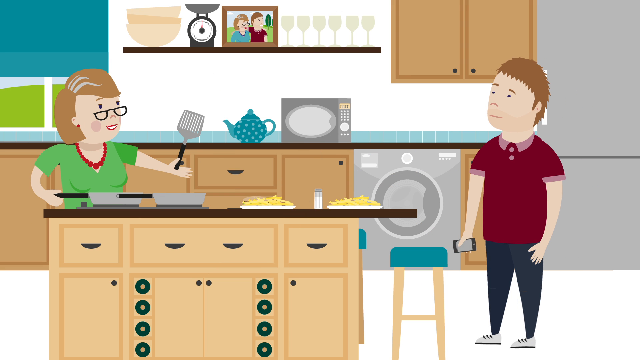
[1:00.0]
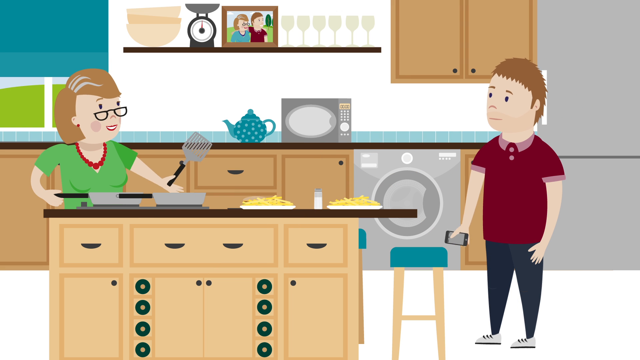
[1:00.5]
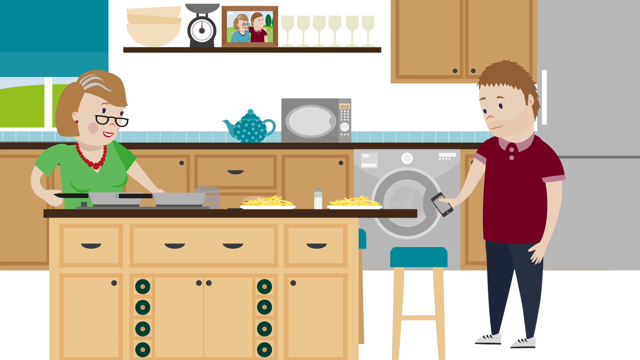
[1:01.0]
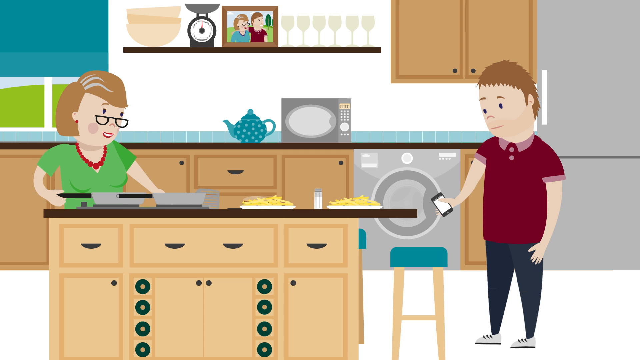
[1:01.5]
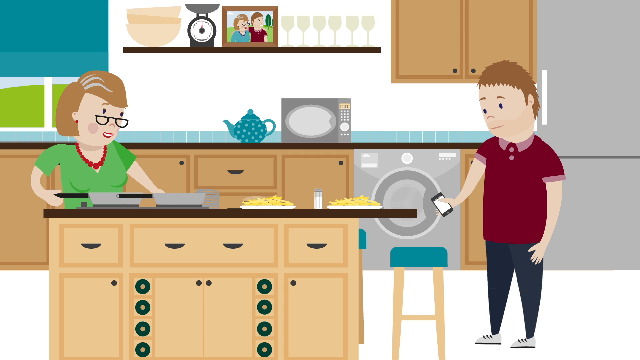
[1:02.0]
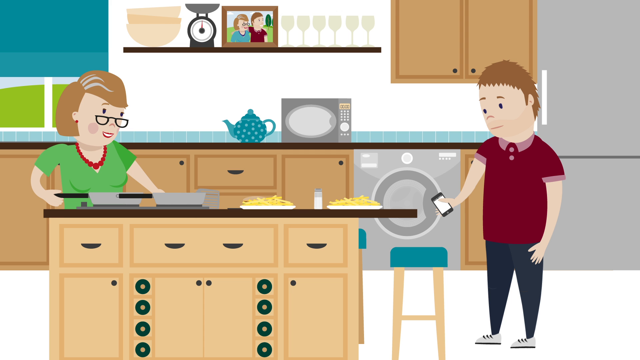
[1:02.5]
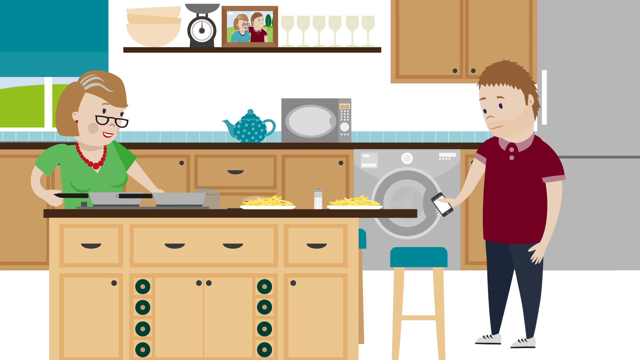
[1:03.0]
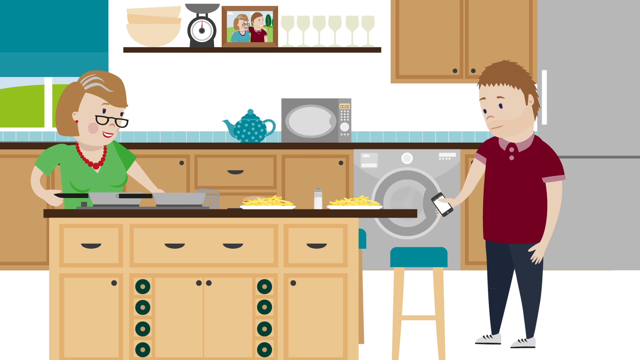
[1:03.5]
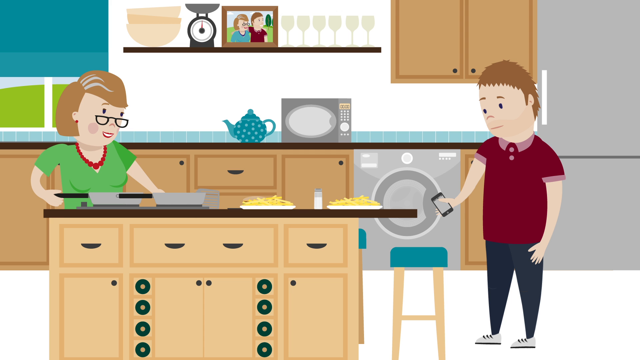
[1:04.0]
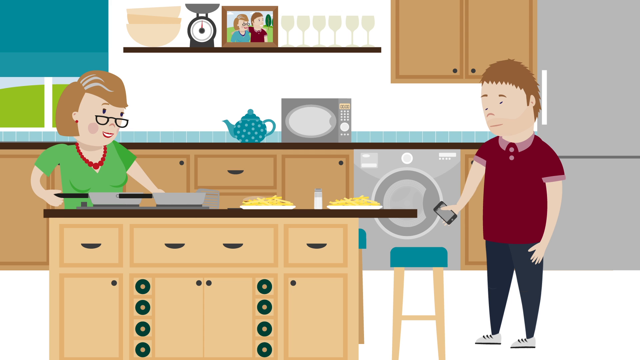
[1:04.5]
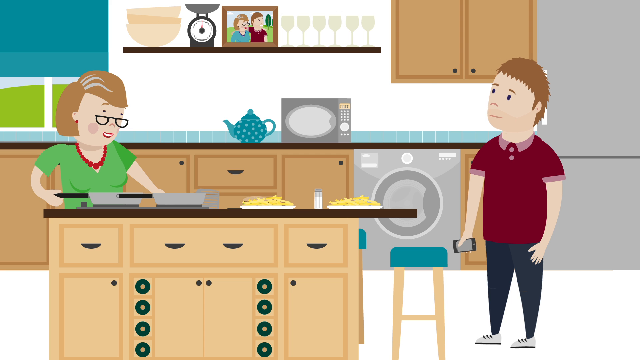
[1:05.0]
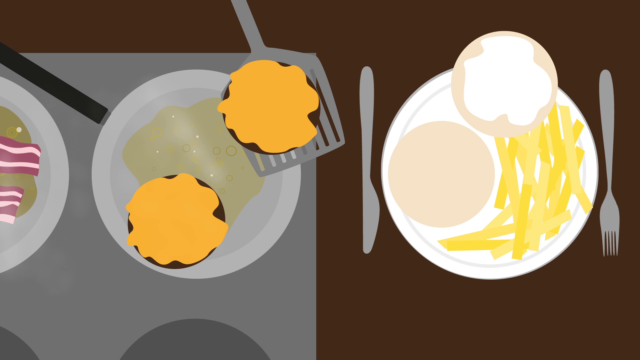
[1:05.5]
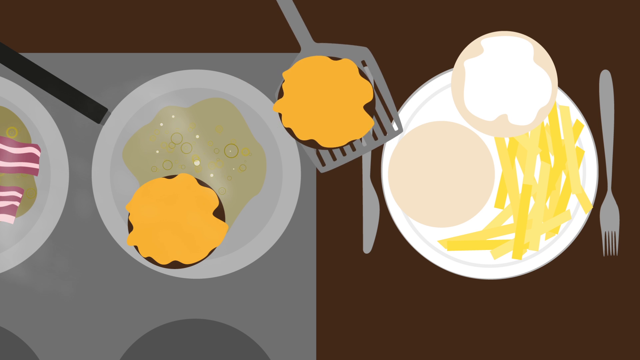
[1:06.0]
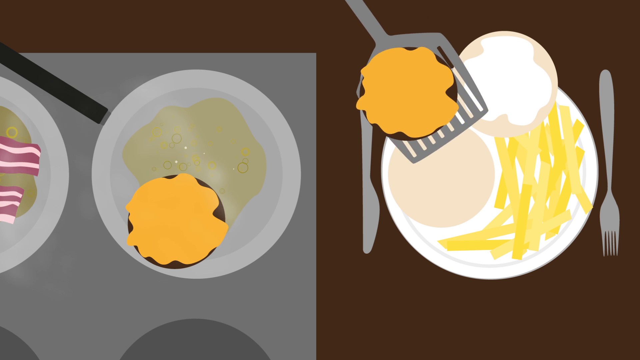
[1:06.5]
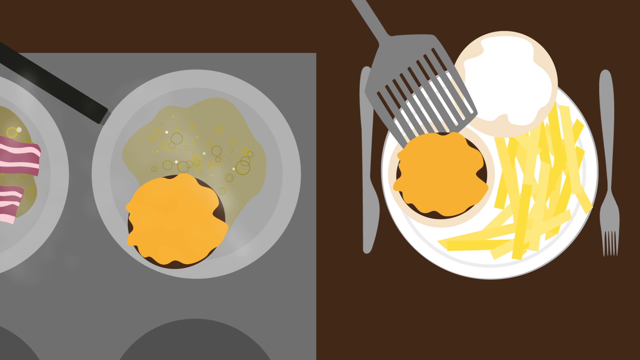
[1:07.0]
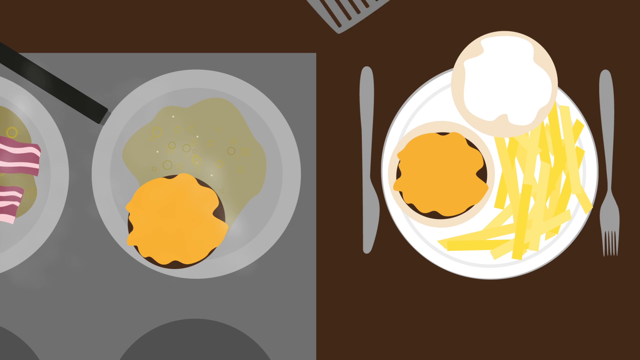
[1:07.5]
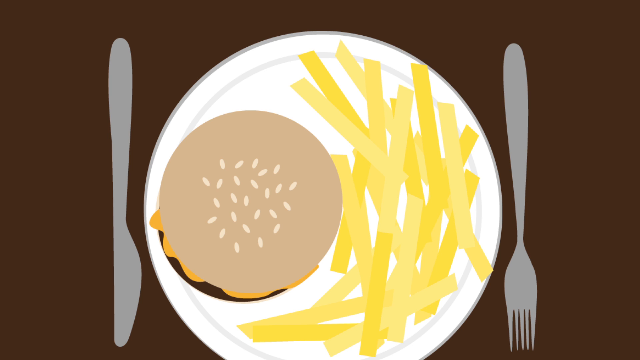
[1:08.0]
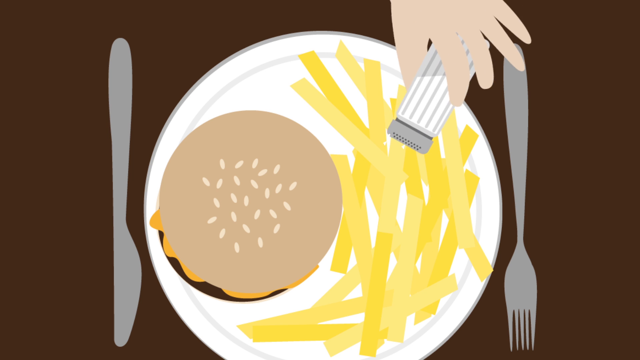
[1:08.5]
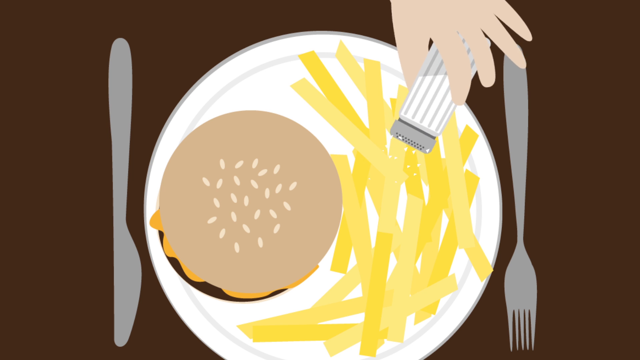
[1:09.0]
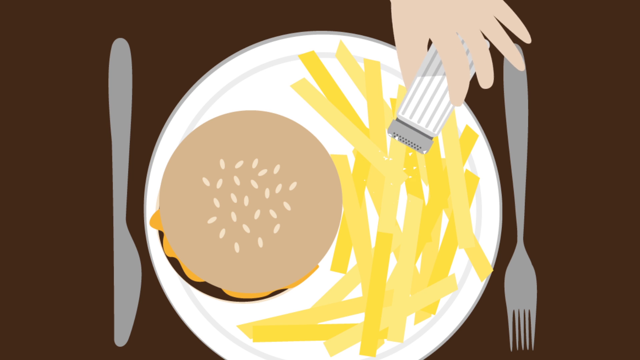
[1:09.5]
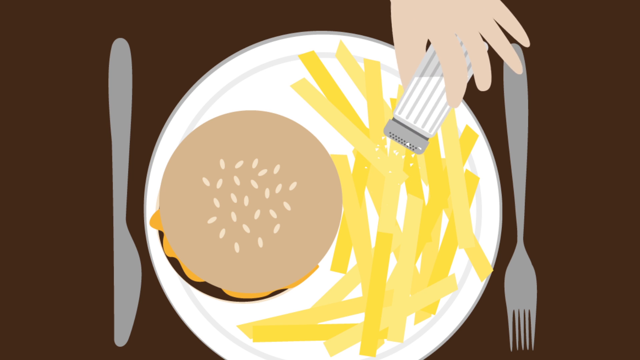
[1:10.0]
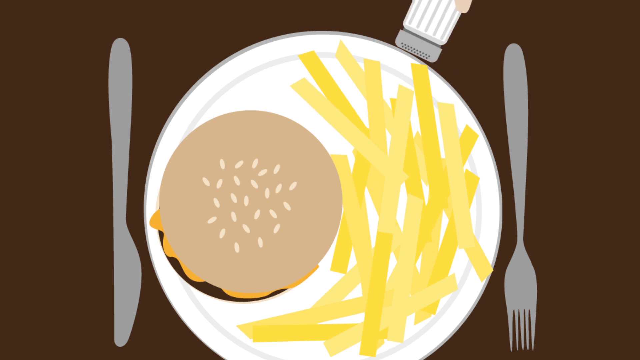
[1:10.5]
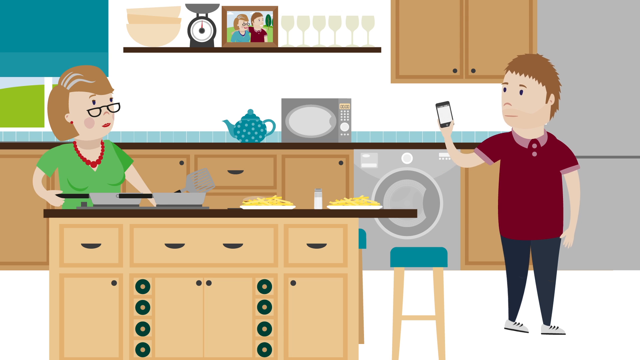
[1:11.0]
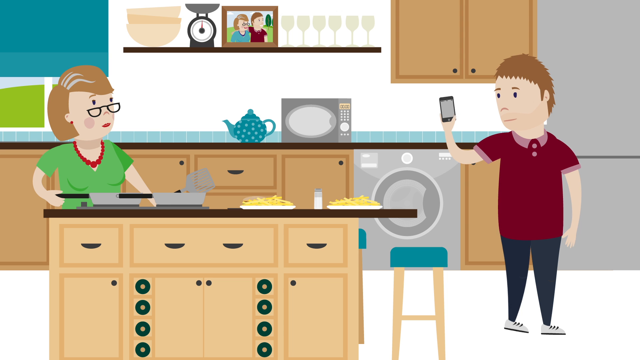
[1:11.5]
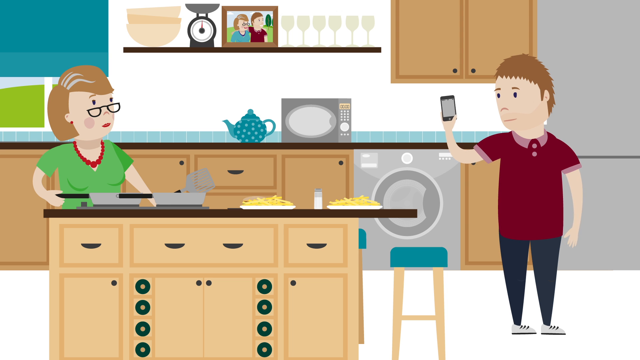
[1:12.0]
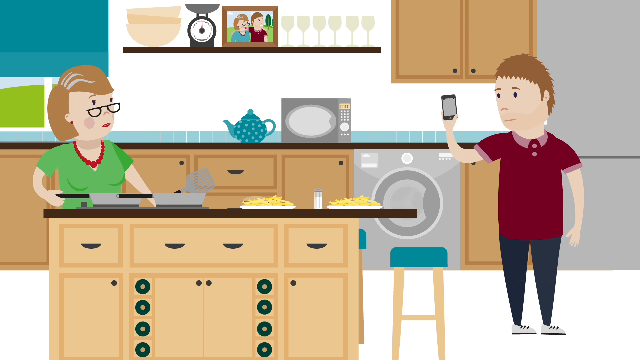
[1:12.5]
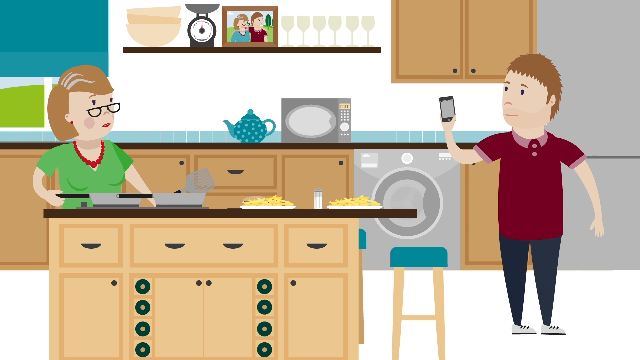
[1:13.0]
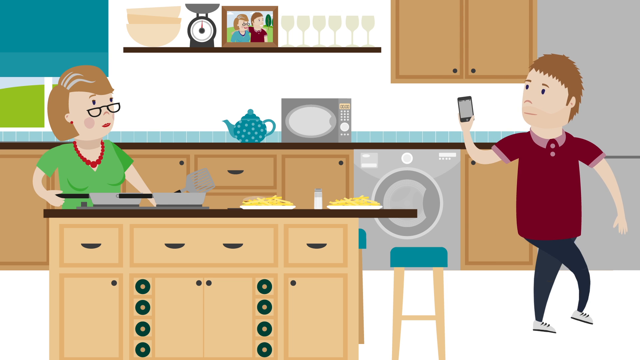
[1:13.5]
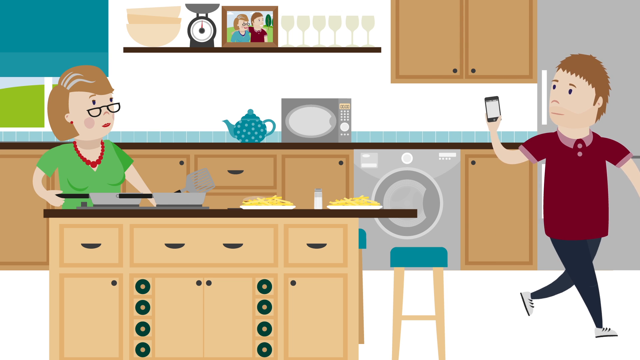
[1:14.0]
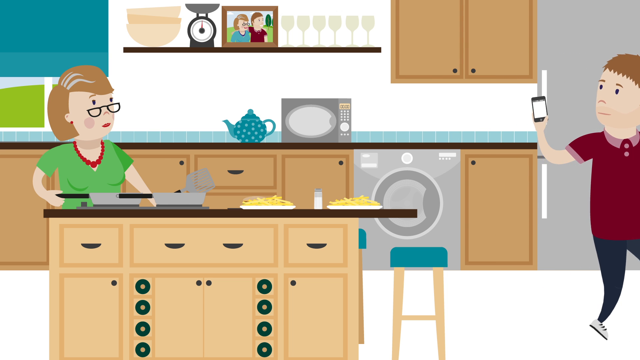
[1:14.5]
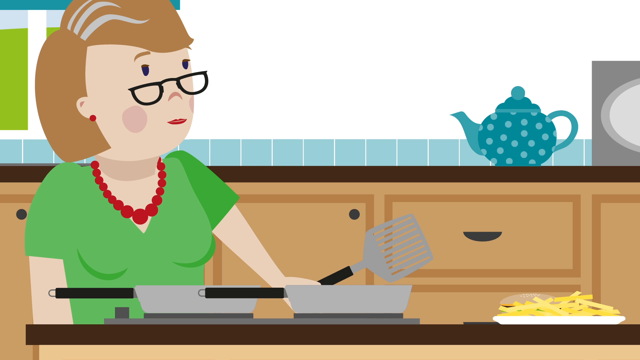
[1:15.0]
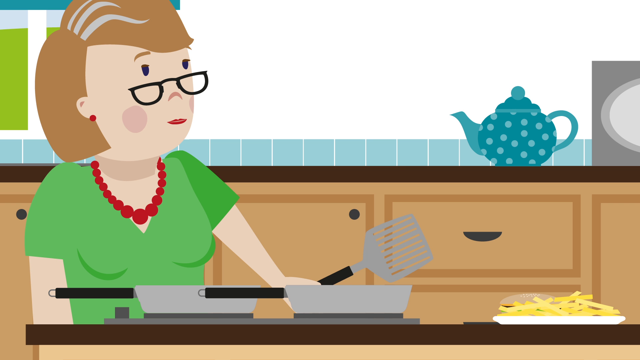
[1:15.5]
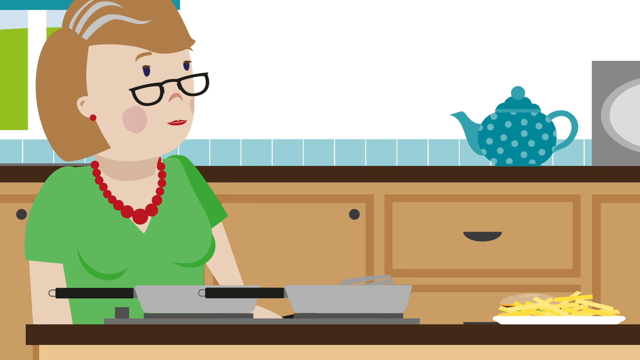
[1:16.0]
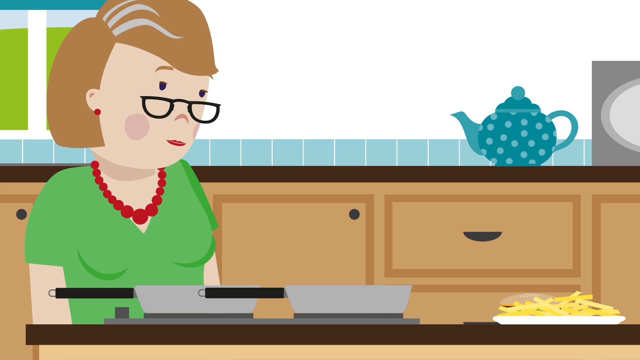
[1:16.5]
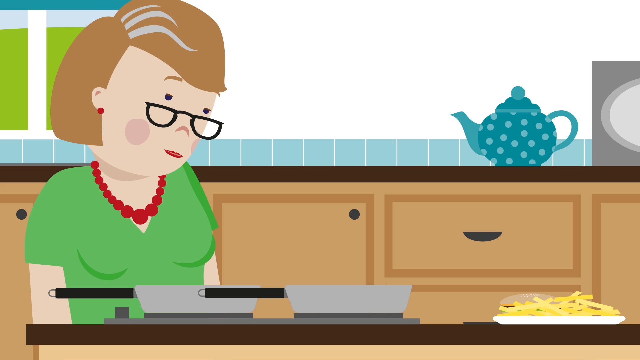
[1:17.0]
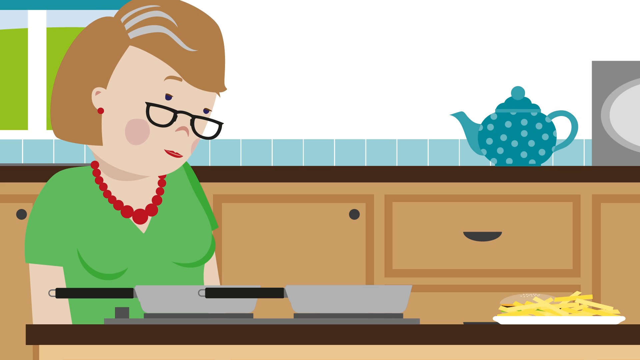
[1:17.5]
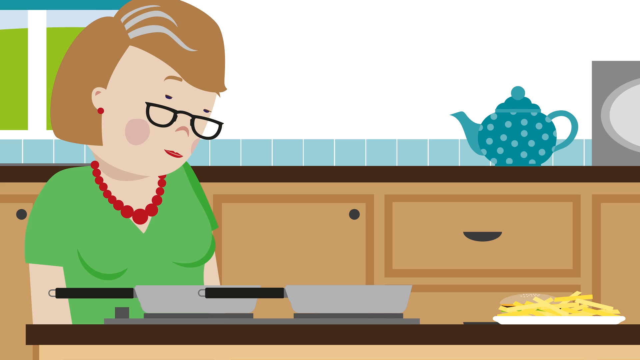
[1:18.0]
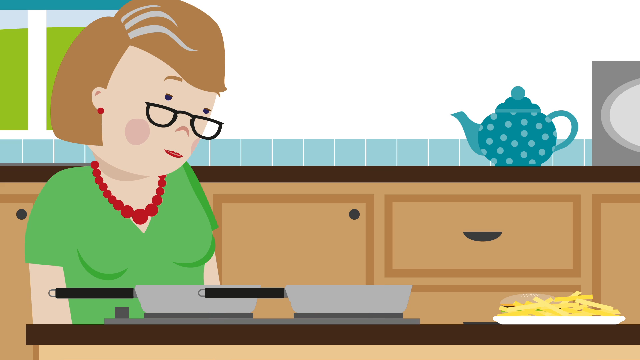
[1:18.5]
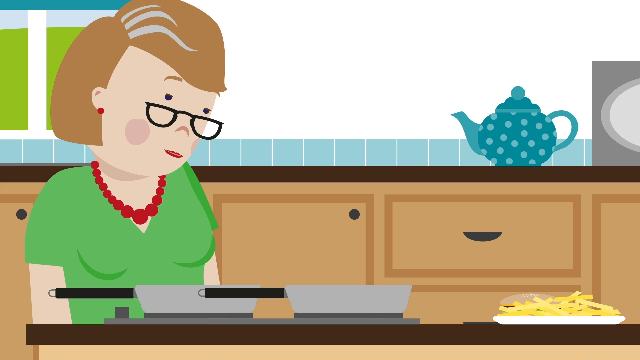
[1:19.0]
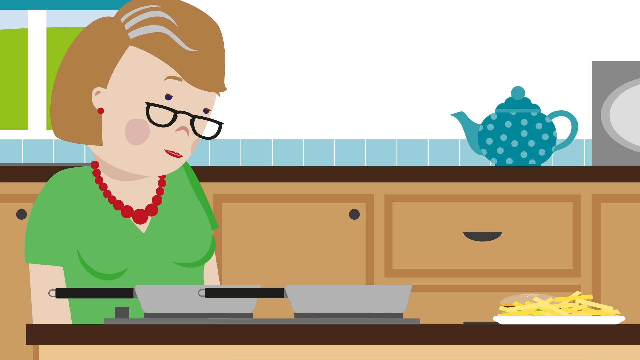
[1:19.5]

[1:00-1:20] A character who wore a blue shirt earlier now wears a red-burgundy shirt. The kitchen has brown cabinets and the island stove, with what looks like possibly spaghetti on two plates on the right side and pans on the left side of the stove. The lady holds a spatula; she has brown hair and black-rimmed sunglasses. On the right side is a boy with a cell phone, in a kind of burgundy shirt, dark greenish pants that are more black than green, and white sneakers. The stools have blue seats. The island has green knobs and light tan and black handles. On the shelf is a teapot, blue with light blue dots, and the microwave is gray. On a higher shelf are a picture of the lady in a blue outfit and the boy in the red-burgundy outfit, some wine glasses and a scale, and there is a brown cabinet door on the right side.